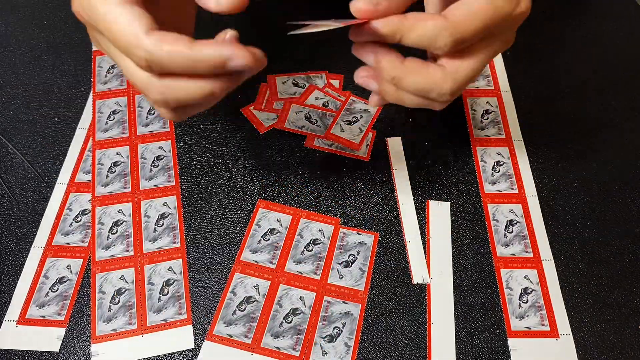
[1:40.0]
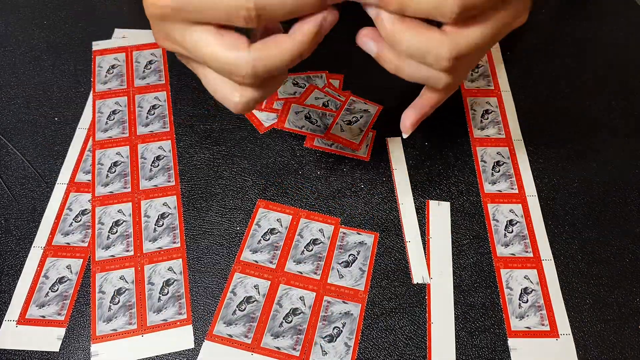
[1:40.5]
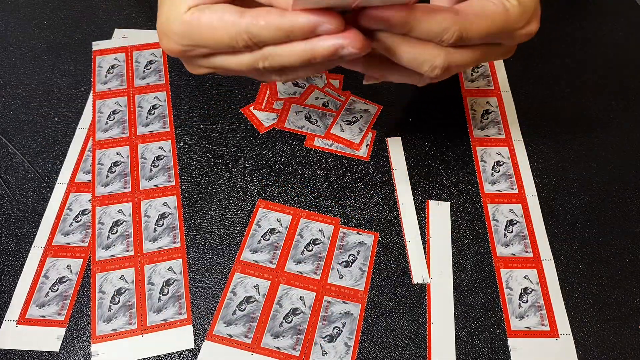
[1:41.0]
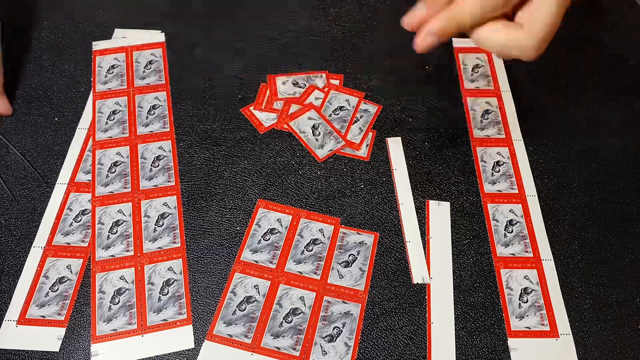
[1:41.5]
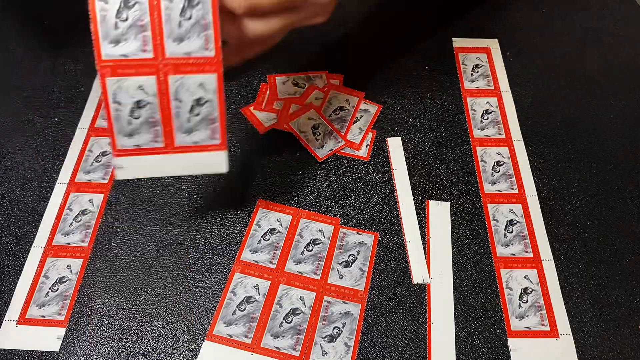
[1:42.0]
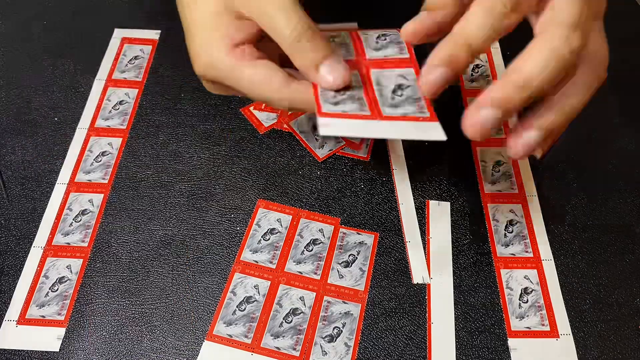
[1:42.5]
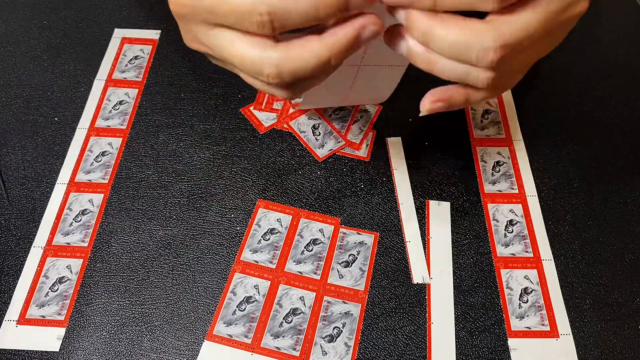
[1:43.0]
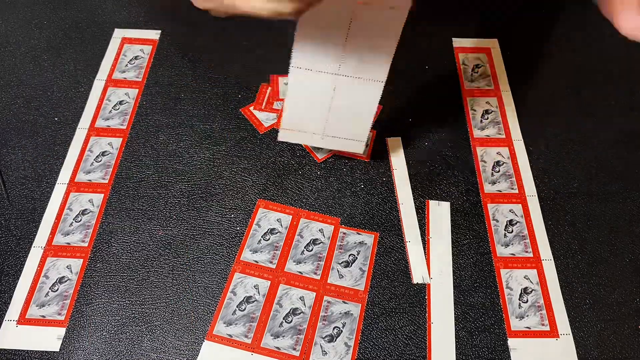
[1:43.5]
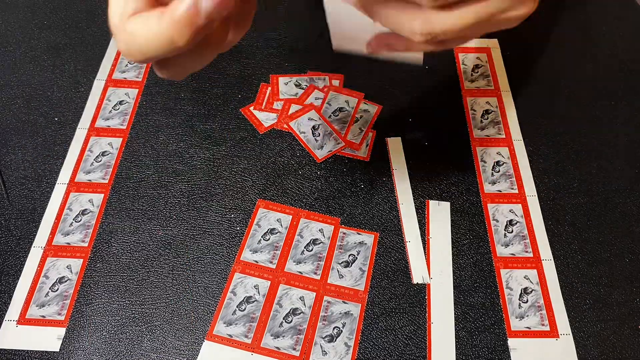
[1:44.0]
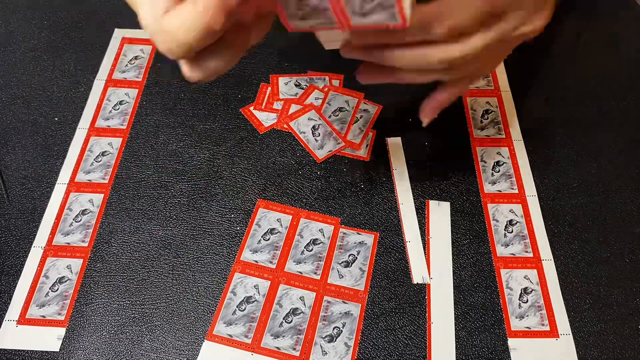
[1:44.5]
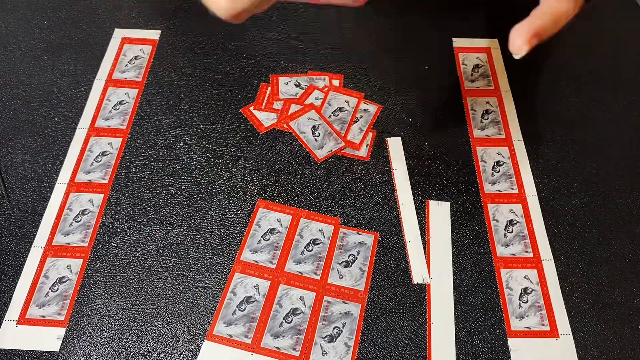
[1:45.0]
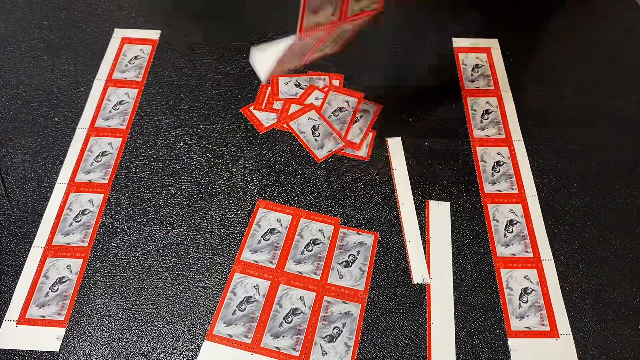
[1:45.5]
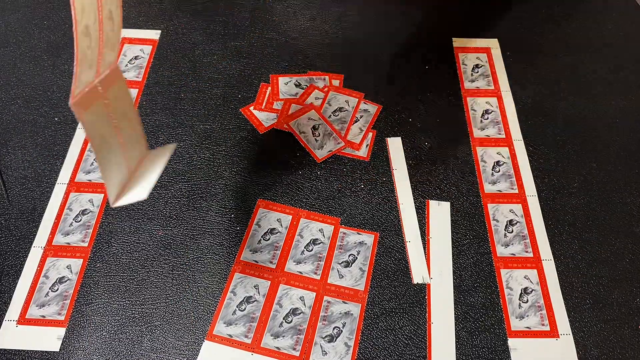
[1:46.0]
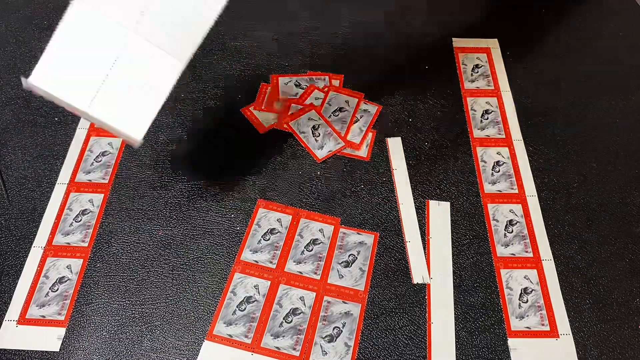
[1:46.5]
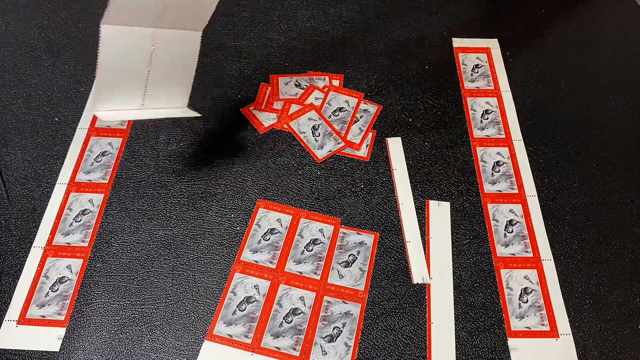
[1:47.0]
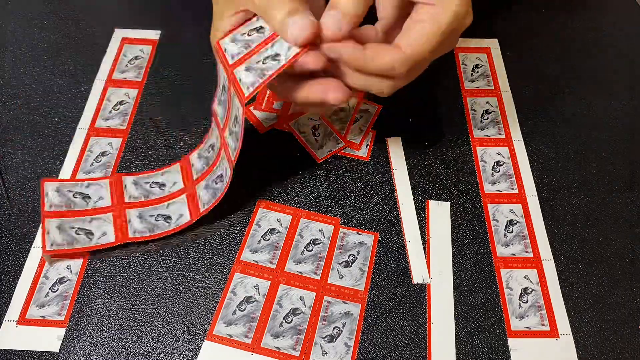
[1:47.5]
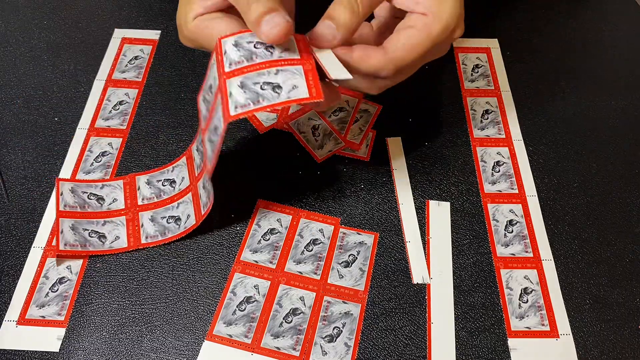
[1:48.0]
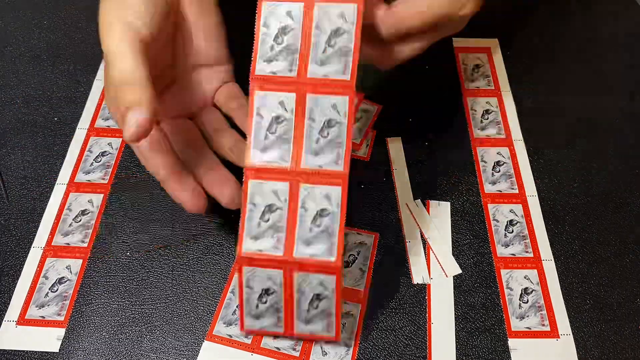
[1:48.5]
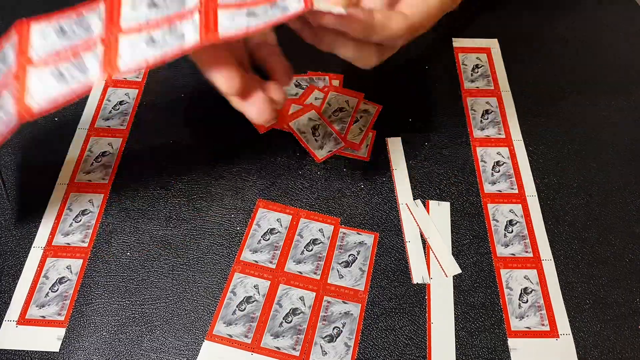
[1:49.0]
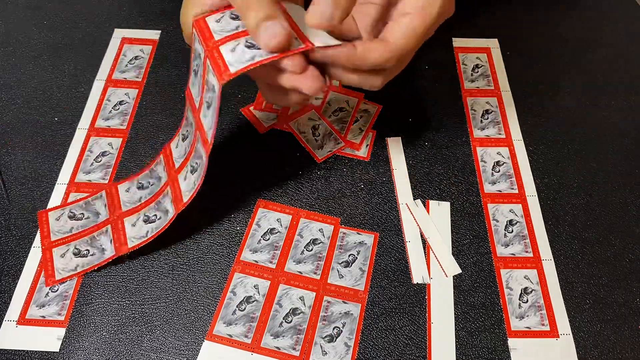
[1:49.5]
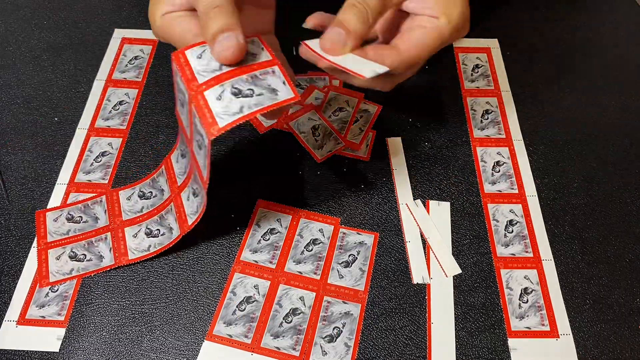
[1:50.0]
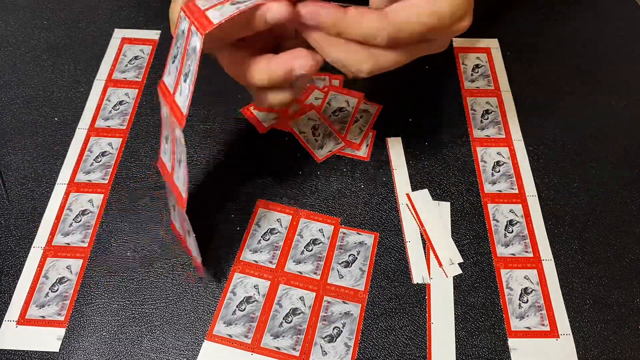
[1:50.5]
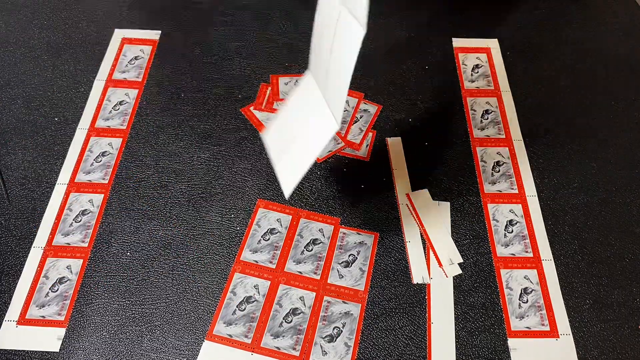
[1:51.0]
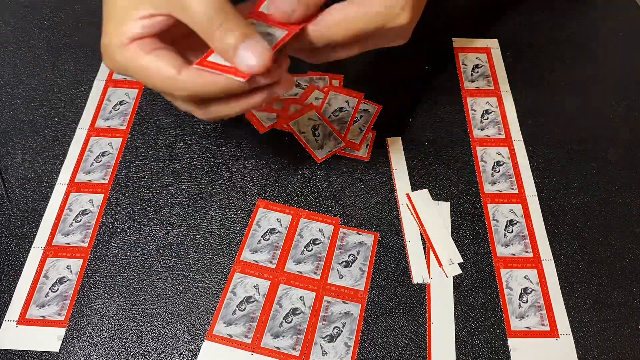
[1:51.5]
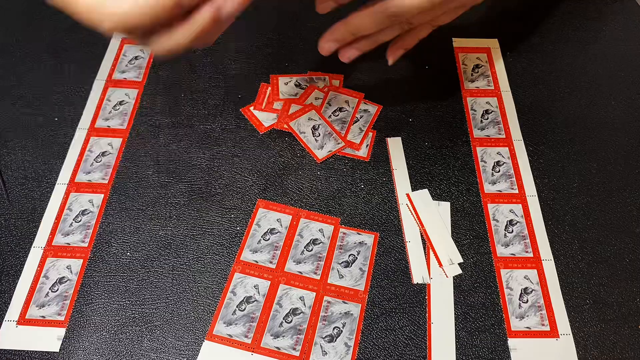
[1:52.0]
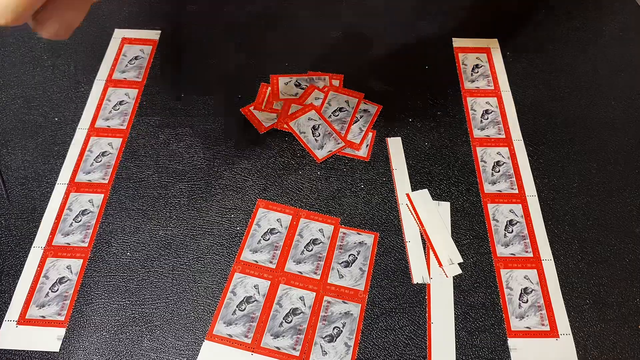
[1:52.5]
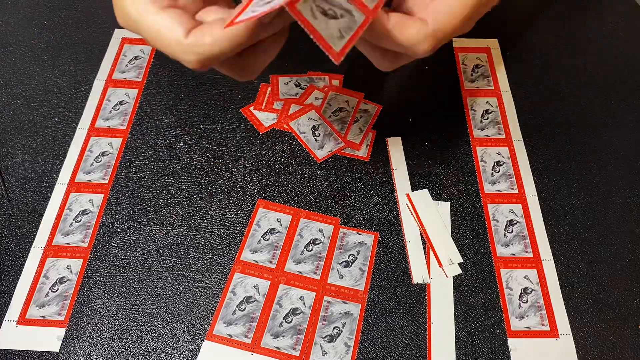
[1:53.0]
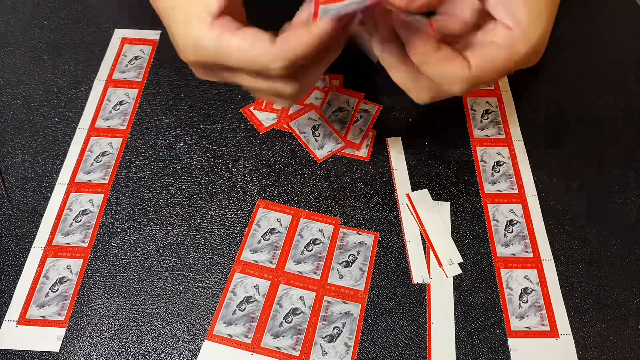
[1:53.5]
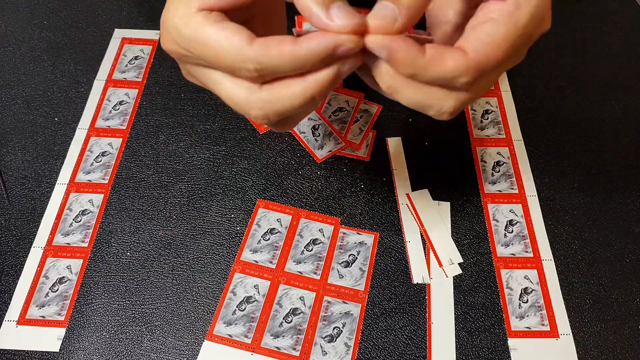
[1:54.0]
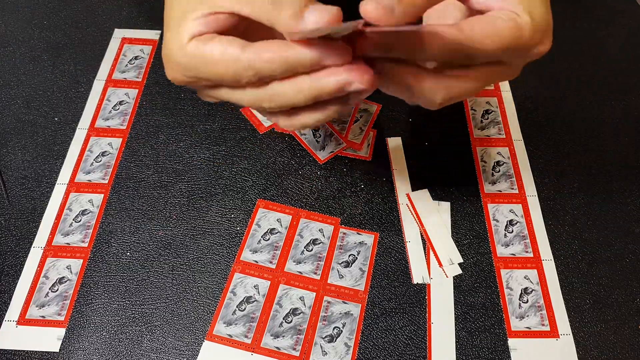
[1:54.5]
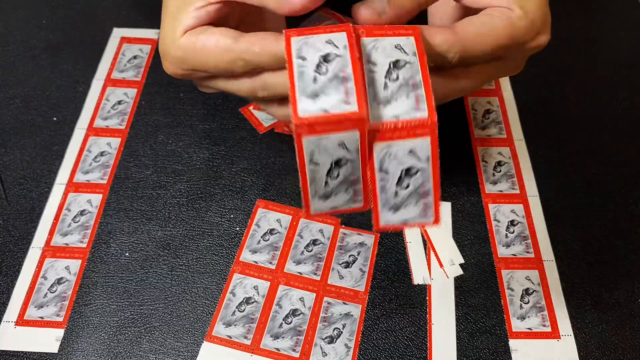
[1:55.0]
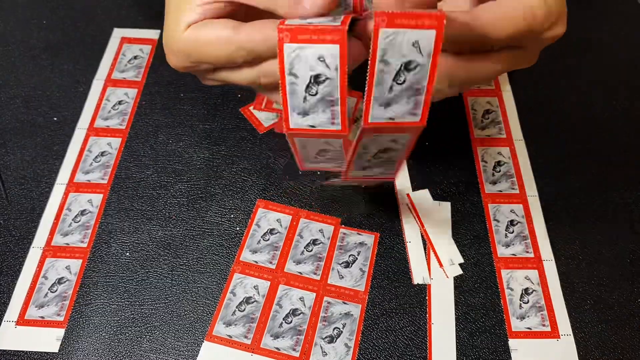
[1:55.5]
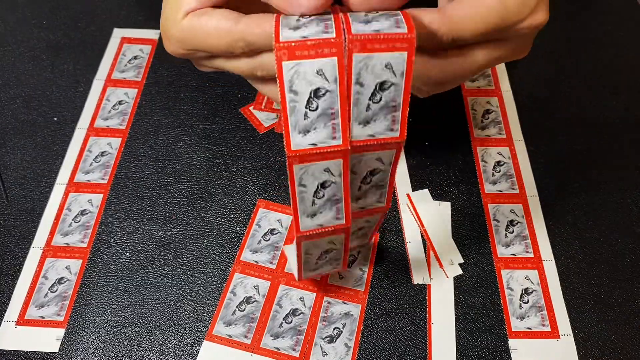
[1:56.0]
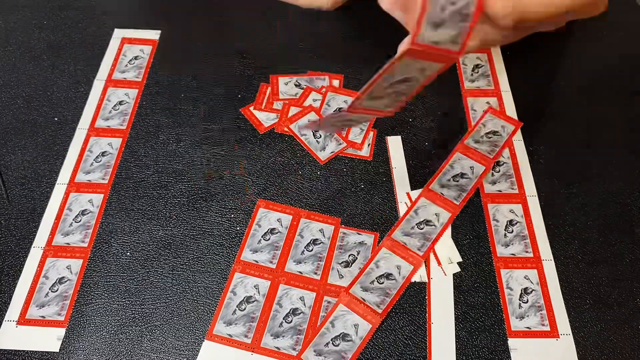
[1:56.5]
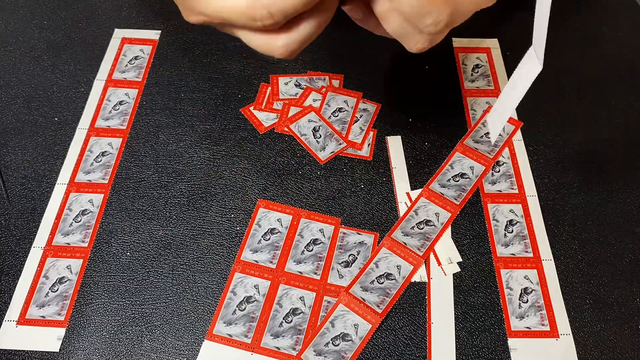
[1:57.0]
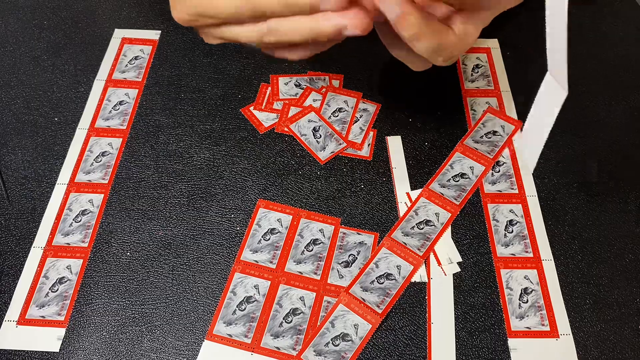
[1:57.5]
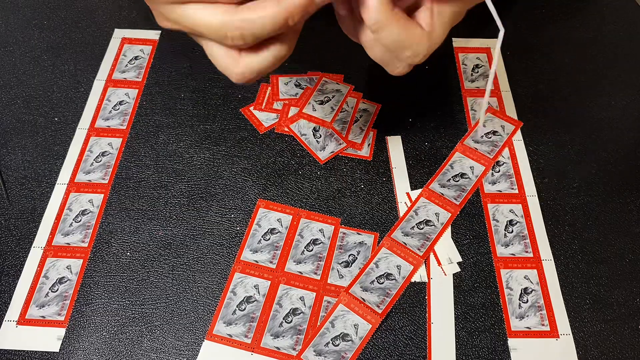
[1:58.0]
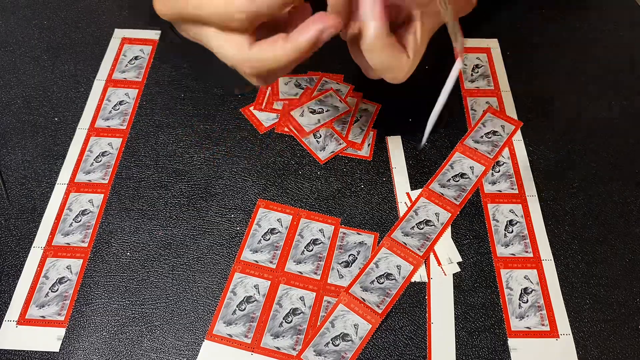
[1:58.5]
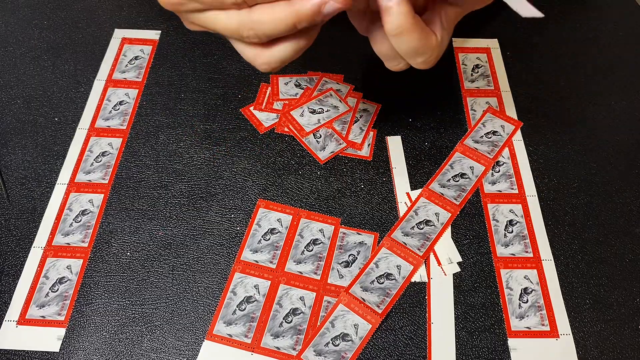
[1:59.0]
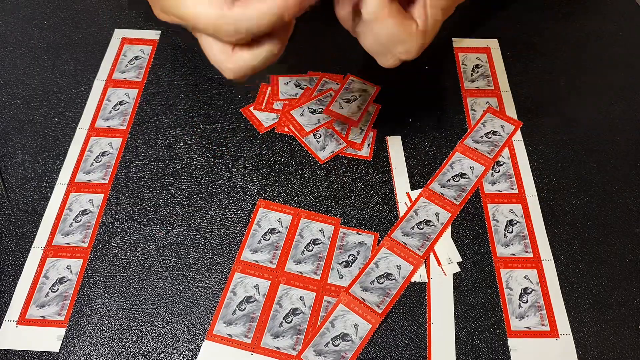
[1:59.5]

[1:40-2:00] The man takes the 2x1 cutout he just creased and separated and splits it into individual units, placing them in the same pile as before. He then takes the 2x5 section of paper he separated a while ago and folds it down one section at a time, creasing it. He removes the white border from the images, folds the paper lengthwise and unfolds it to crease it, then separates it lengthwise into 2 columns of 5 units. He continues separating them one by one, placing them in the same pile as the other units. He does this with both sheets of paper, starting with the leftmost one. The units go into the pile, and the extra borders he simply sets on the table.